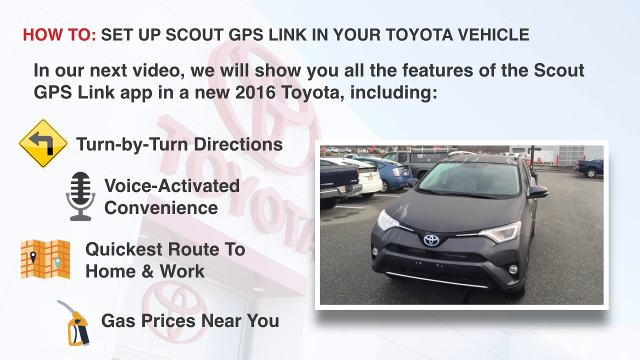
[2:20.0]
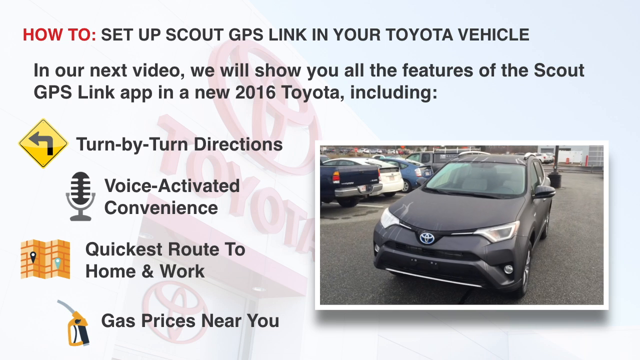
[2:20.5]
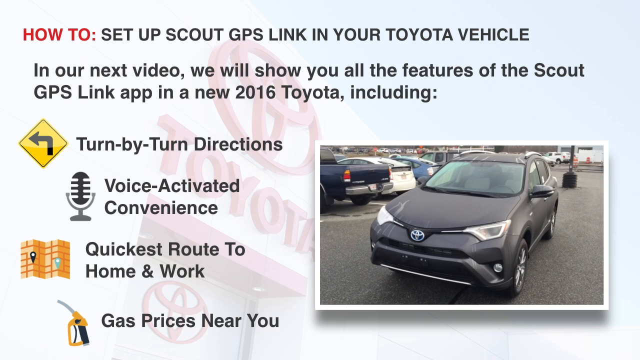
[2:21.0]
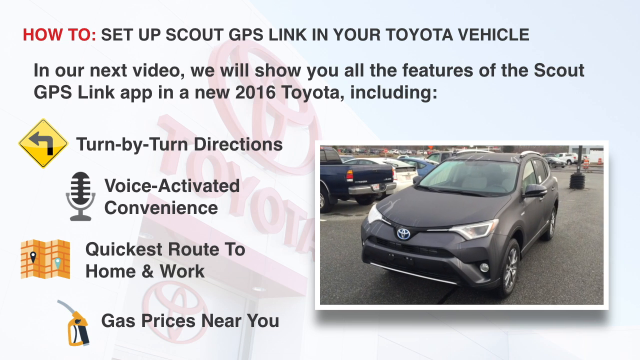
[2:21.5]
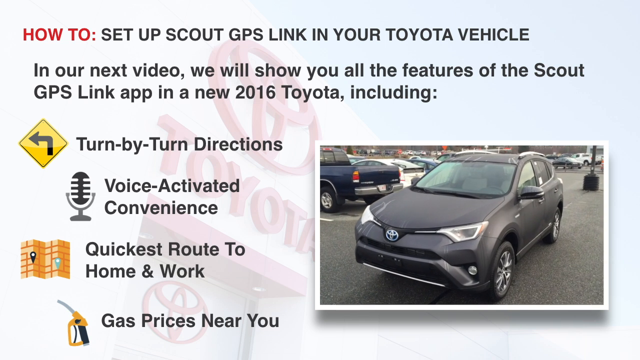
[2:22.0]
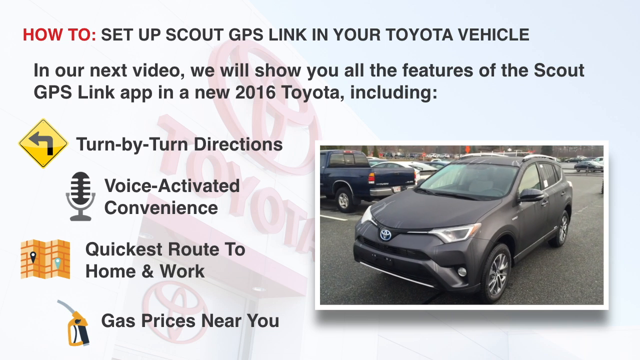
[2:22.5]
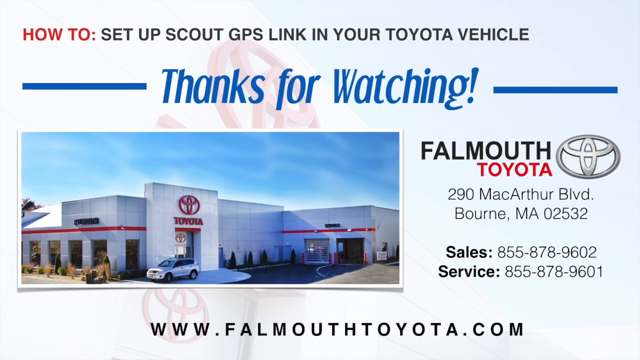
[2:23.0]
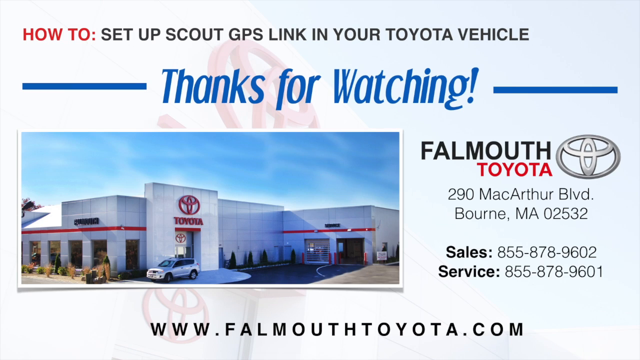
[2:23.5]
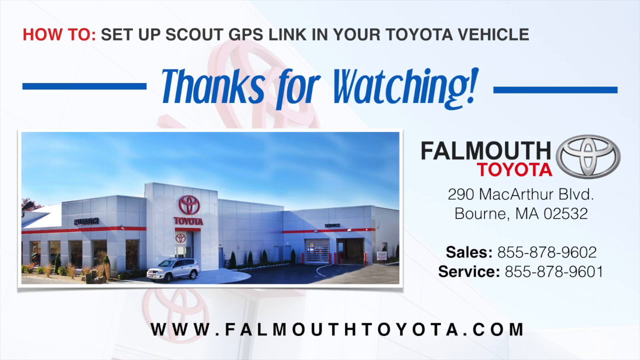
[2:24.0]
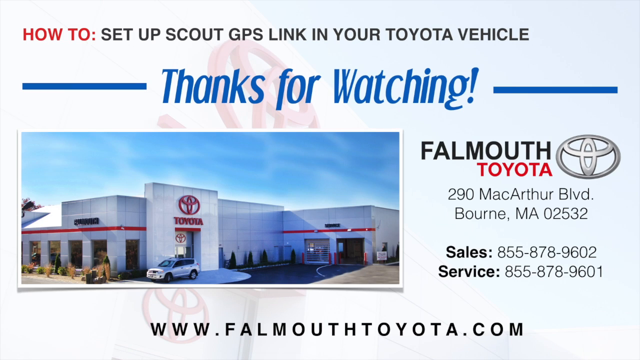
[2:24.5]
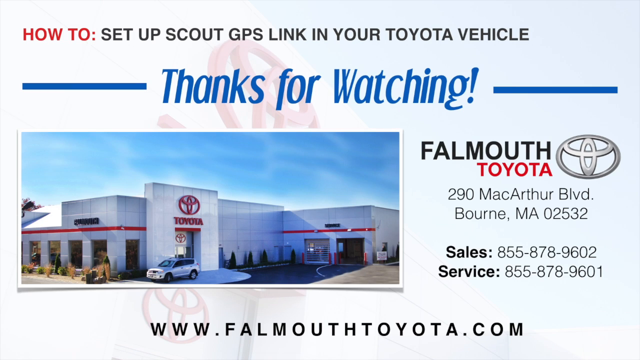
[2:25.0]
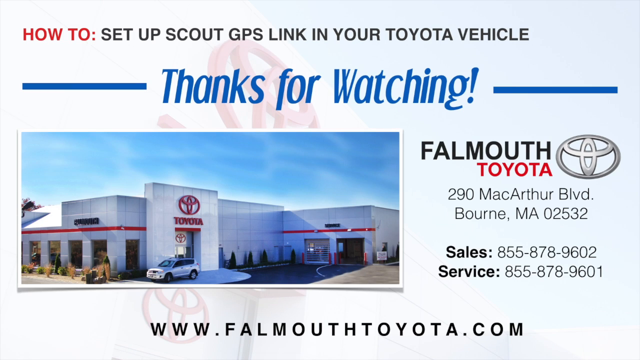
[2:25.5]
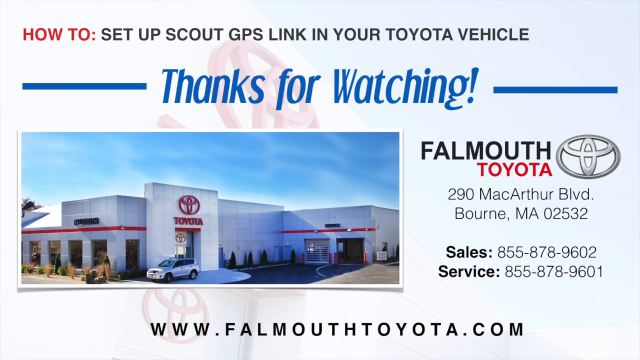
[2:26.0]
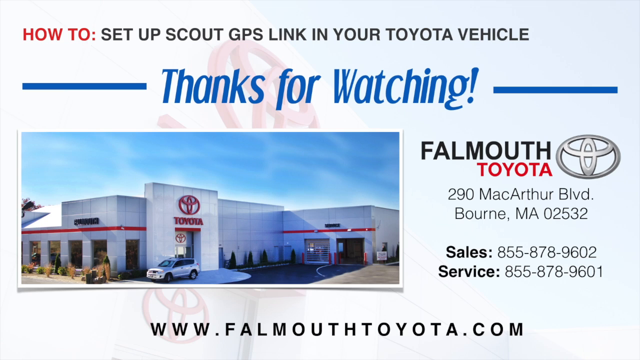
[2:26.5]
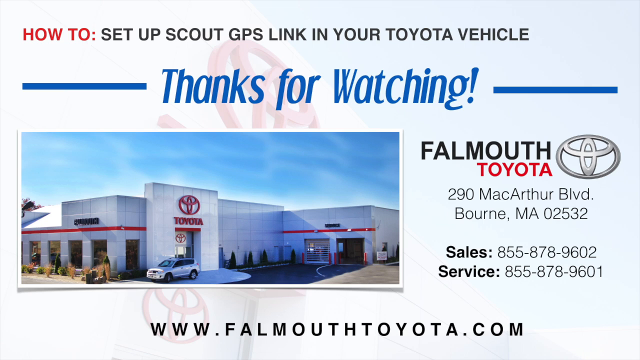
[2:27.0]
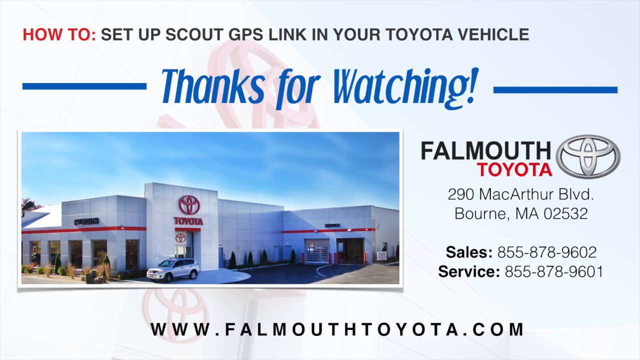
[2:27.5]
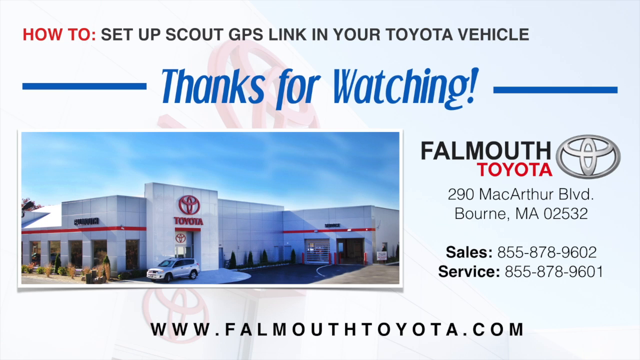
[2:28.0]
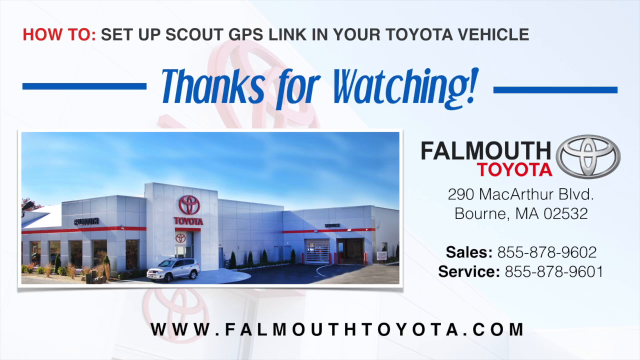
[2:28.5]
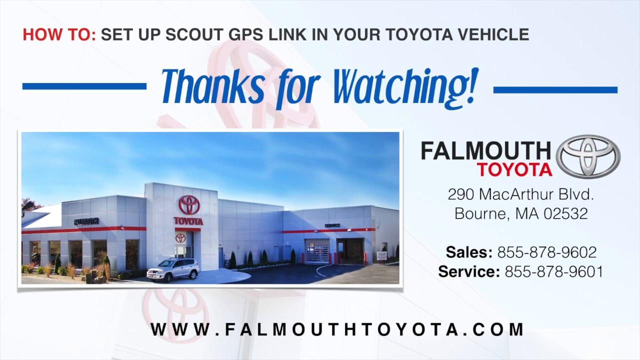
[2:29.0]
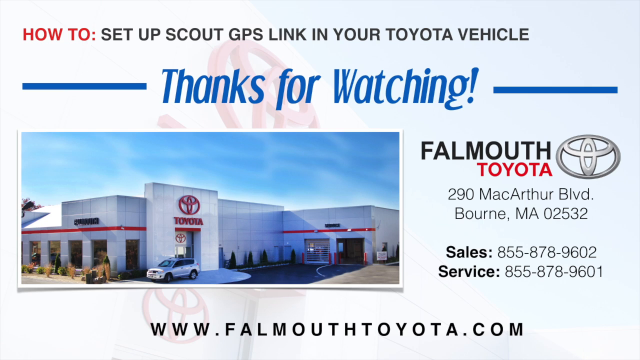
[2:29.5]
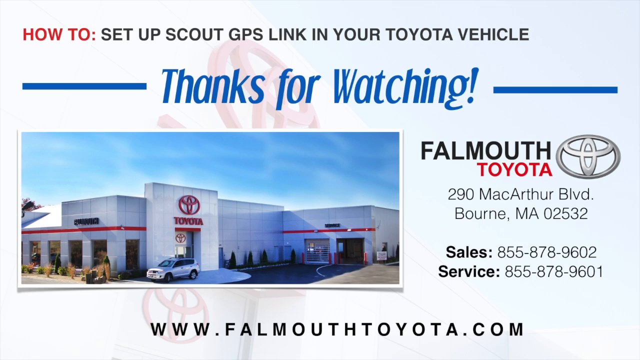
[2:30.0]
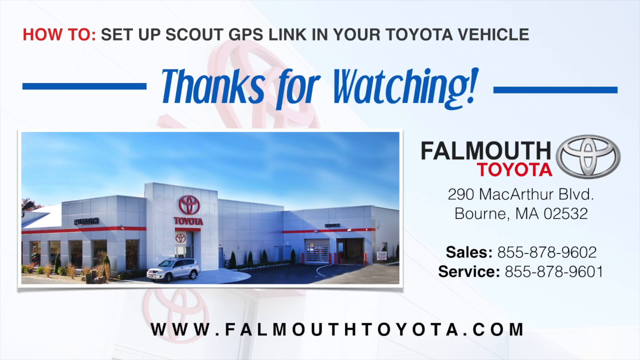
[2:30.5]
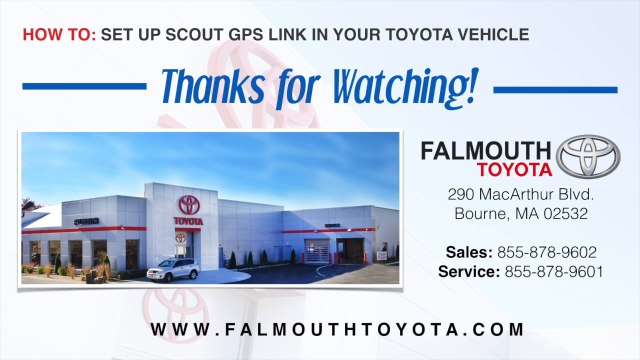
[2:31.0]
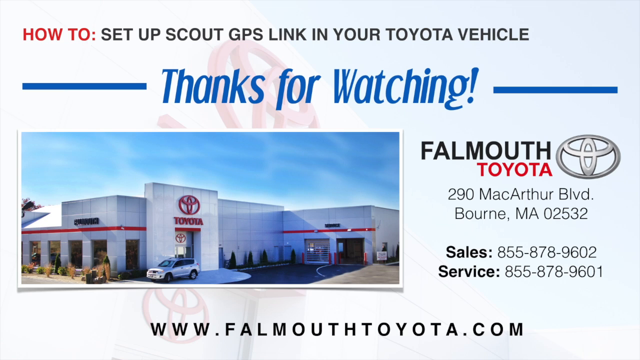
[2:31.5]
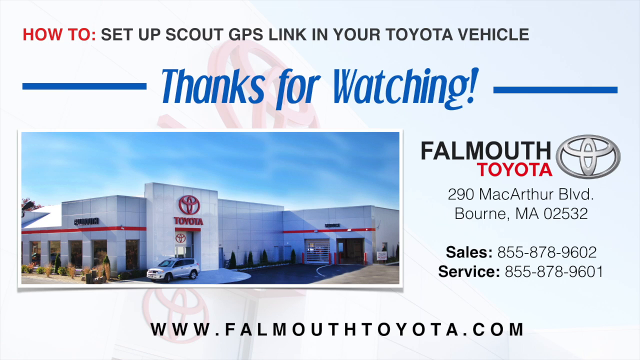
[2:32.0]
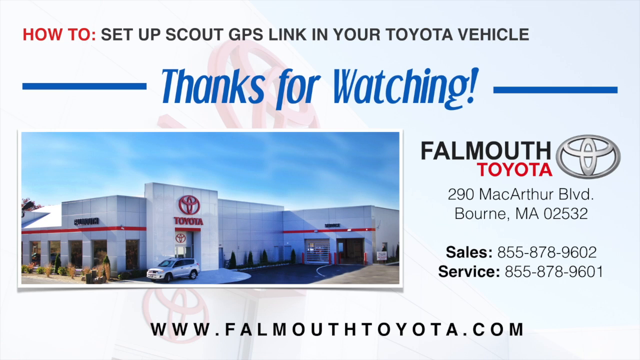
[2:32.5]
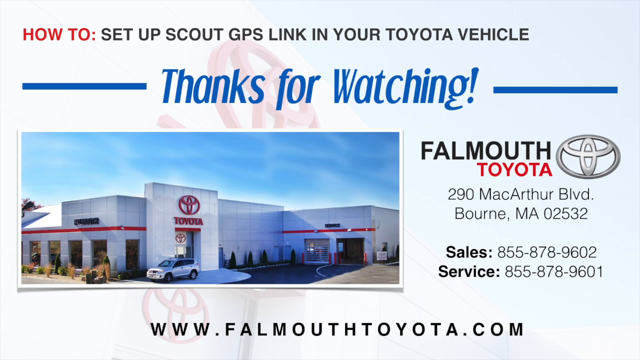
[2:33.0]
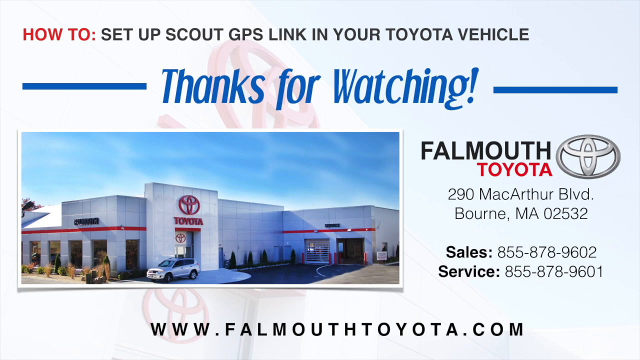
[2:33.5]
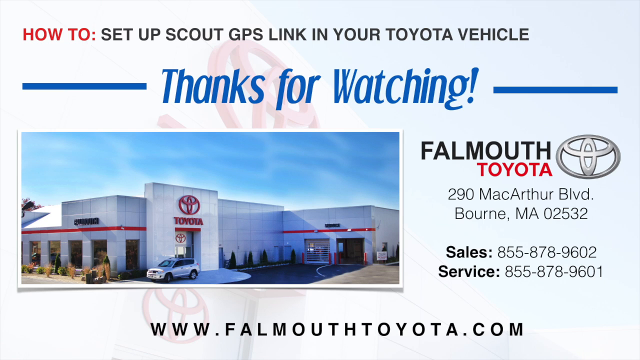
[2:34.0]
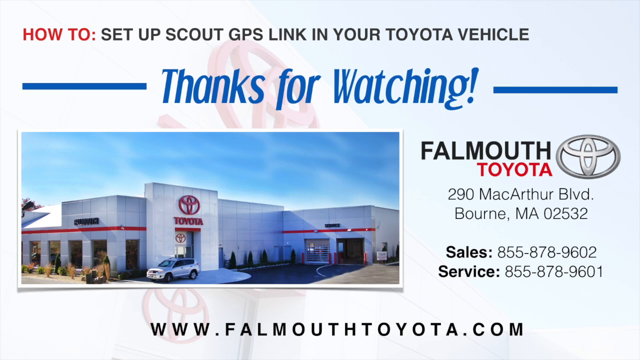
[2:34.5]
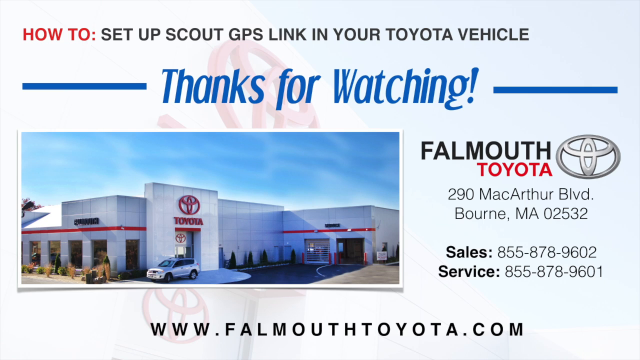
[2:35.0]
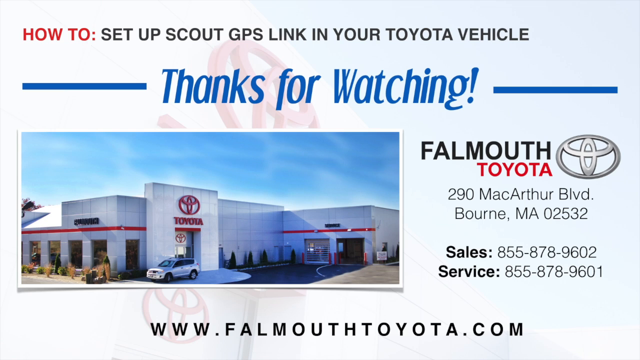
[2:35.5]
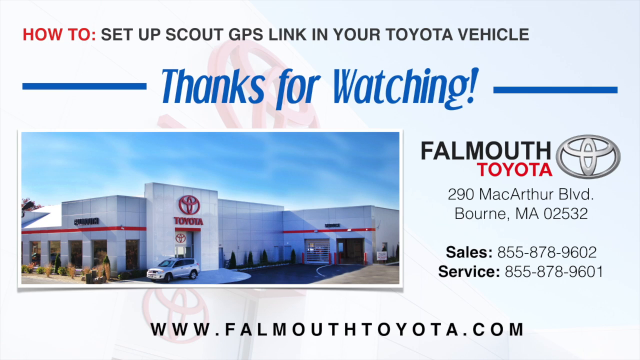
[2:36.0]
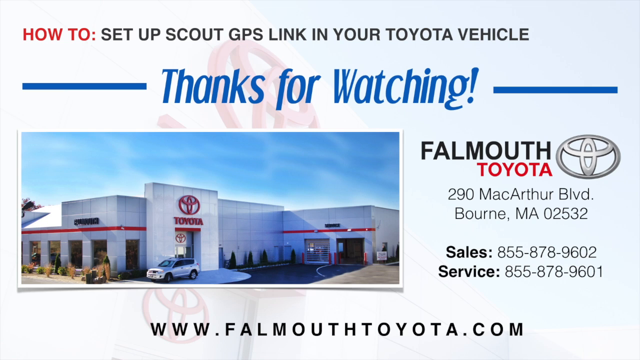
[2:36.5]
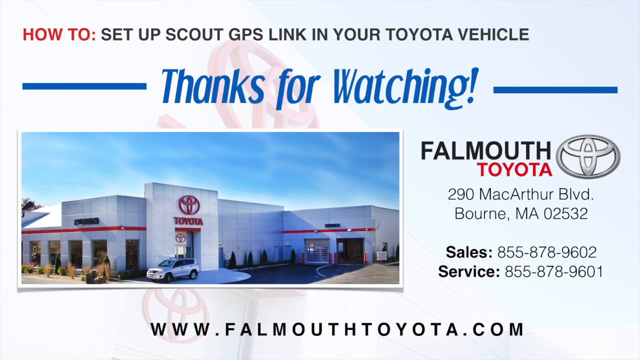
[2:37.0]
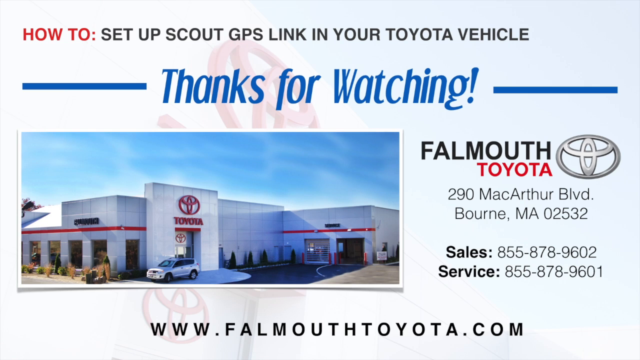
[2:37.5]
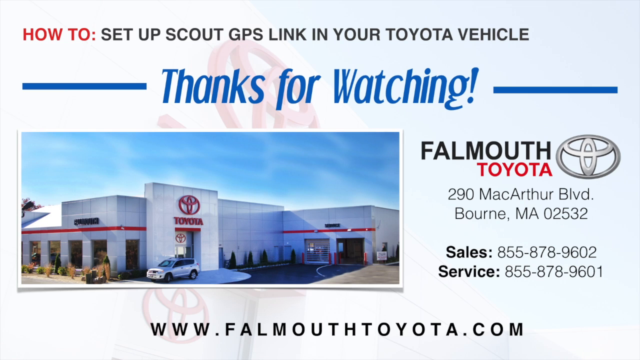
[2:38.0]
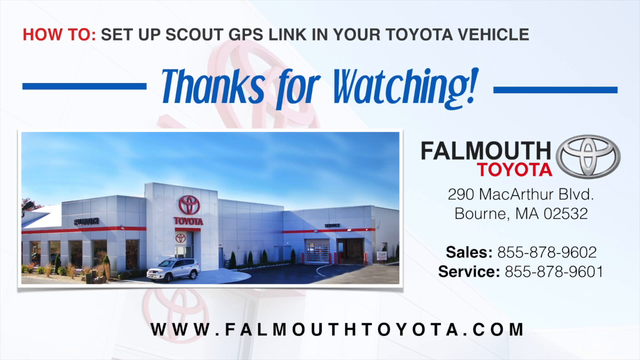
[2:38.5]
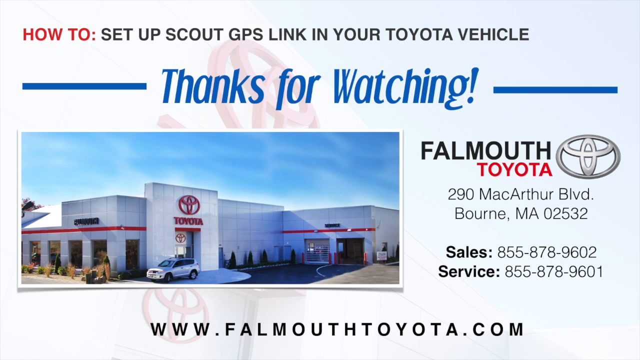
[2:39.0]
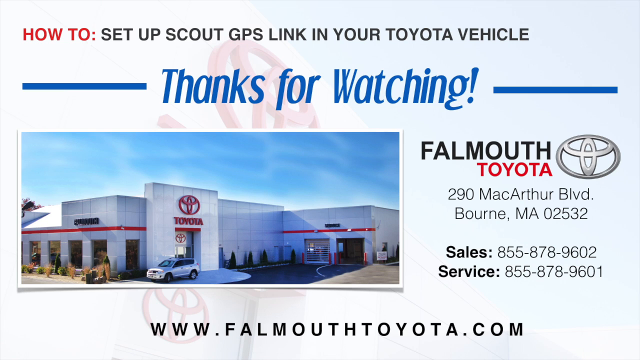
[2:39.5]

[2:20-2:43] The gray Toyota continues to be circled around in the video at the bottom right. Its headlight is visible, as well as the Toyota logo on the front: a silver T on a blue oval background. After that comes an end screen that says "thanks for watching," with a blue banner at the top, a Toyota building on the left, and address information on the right. The building is very white, silver-looking, and red. The address reads 290 MacArthur Boulevard, Bourne Massachusetts, and below it at the bottom right are two phone numbers, one for sales and one for service.